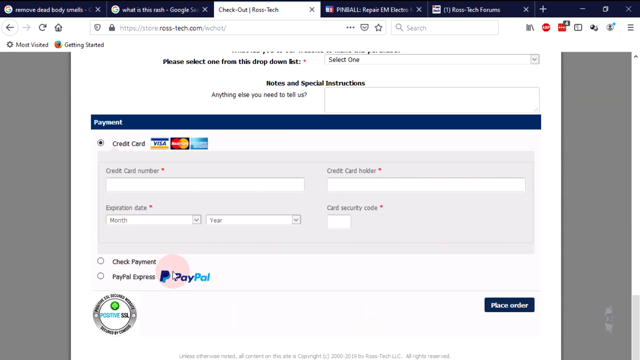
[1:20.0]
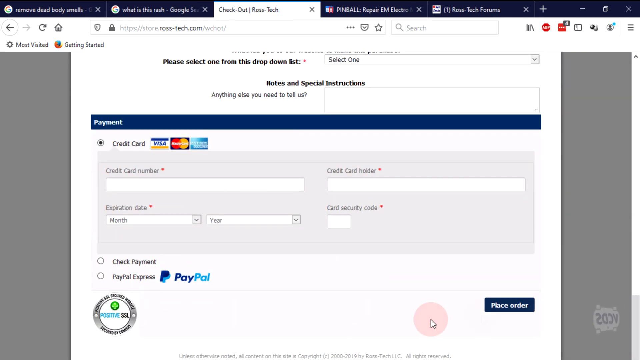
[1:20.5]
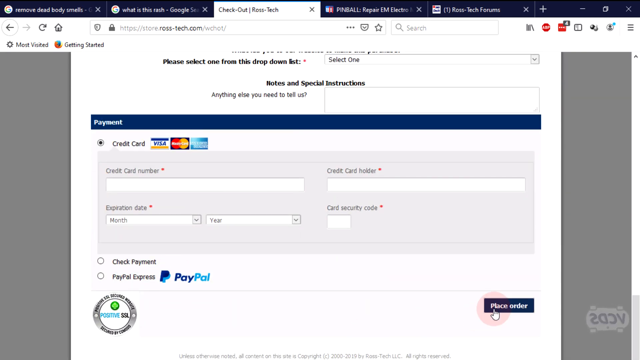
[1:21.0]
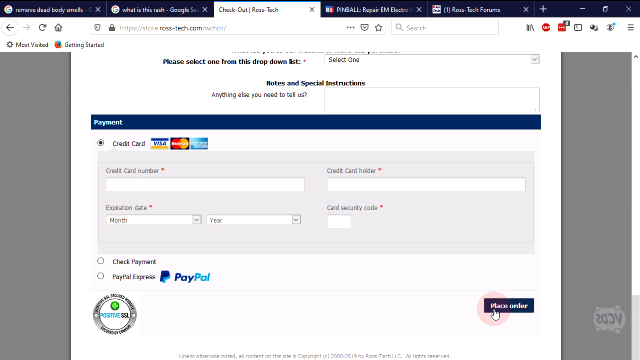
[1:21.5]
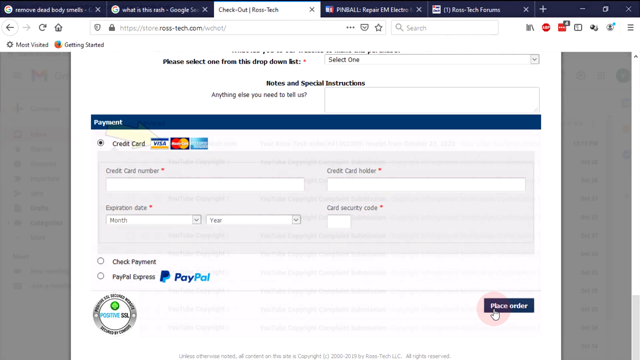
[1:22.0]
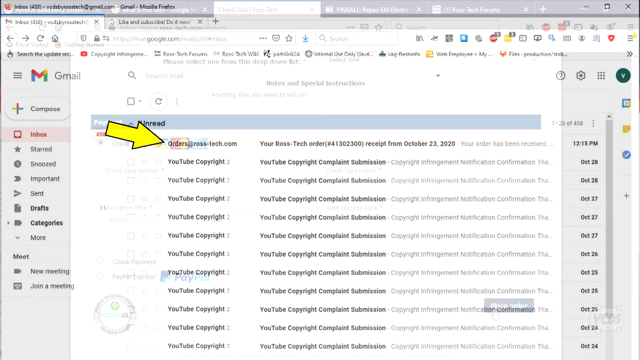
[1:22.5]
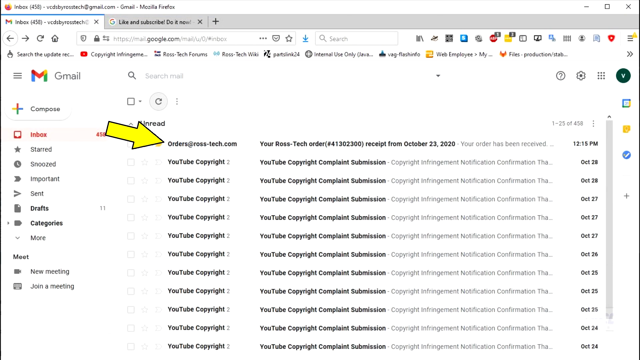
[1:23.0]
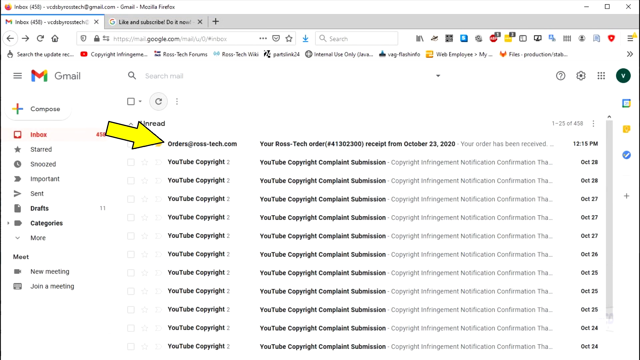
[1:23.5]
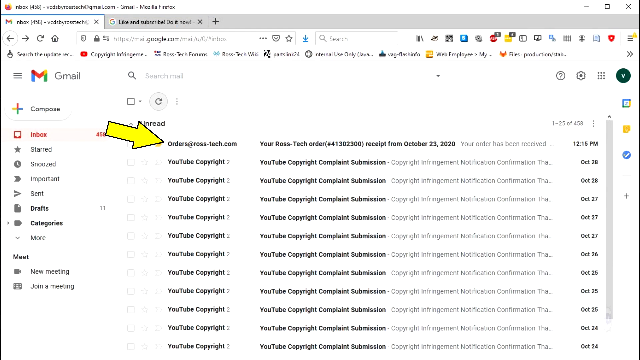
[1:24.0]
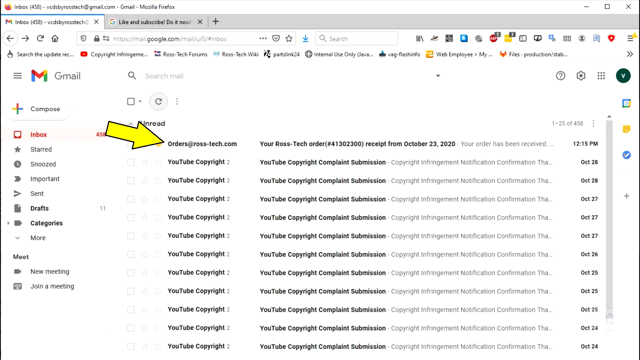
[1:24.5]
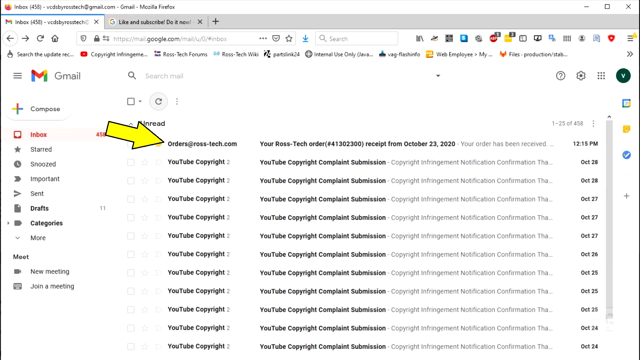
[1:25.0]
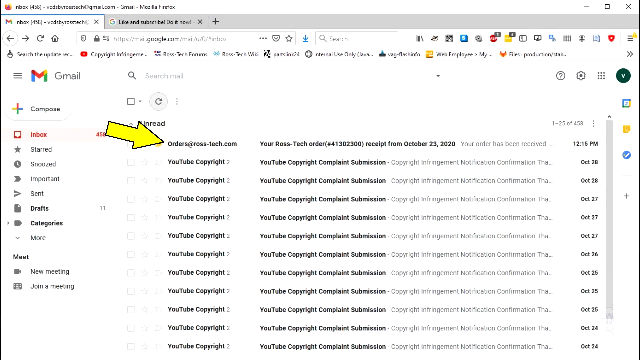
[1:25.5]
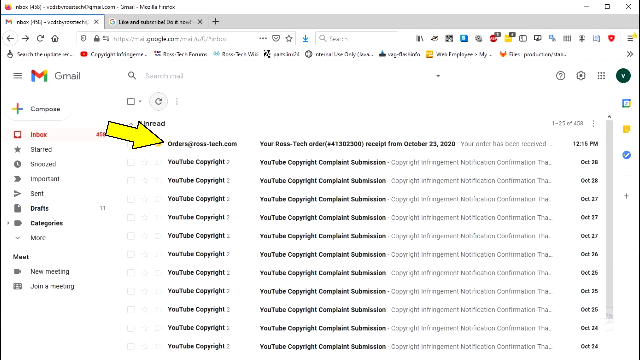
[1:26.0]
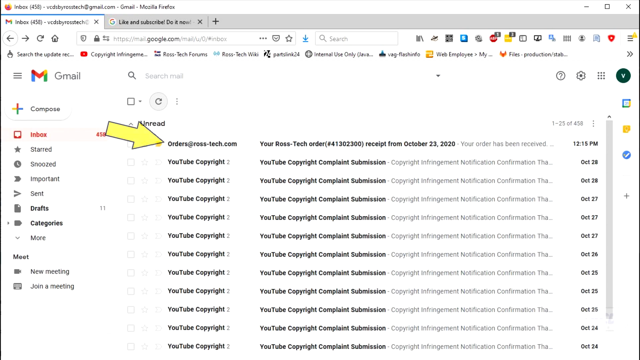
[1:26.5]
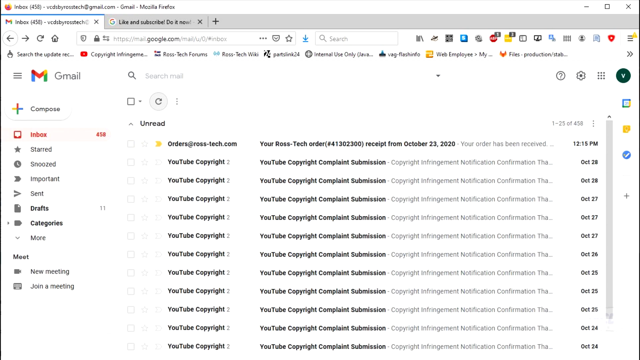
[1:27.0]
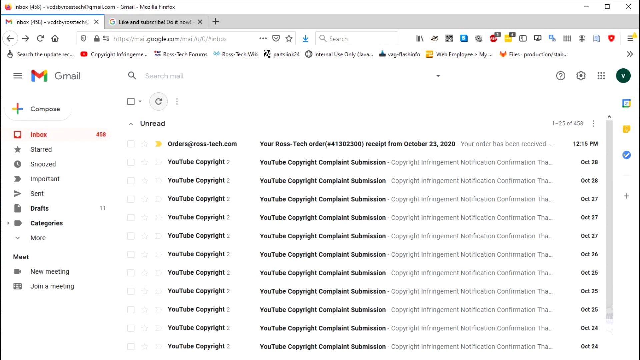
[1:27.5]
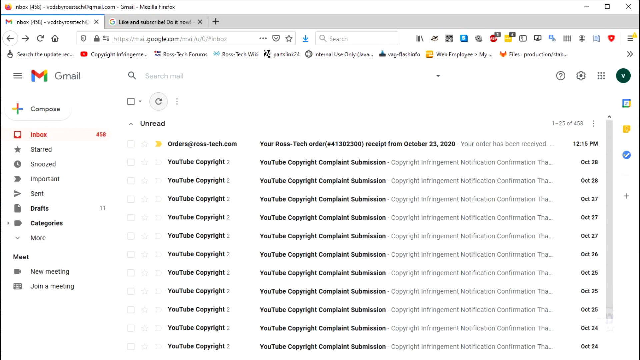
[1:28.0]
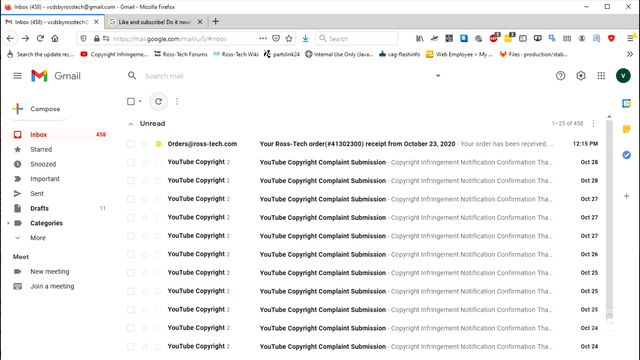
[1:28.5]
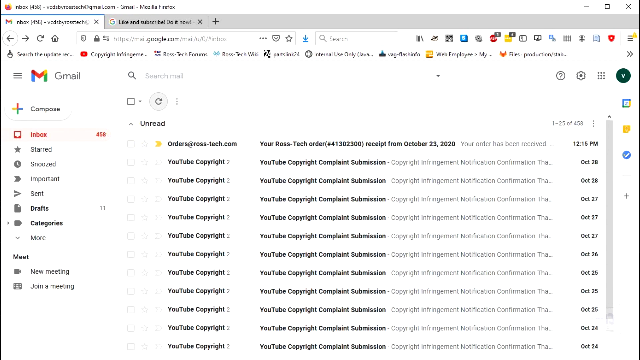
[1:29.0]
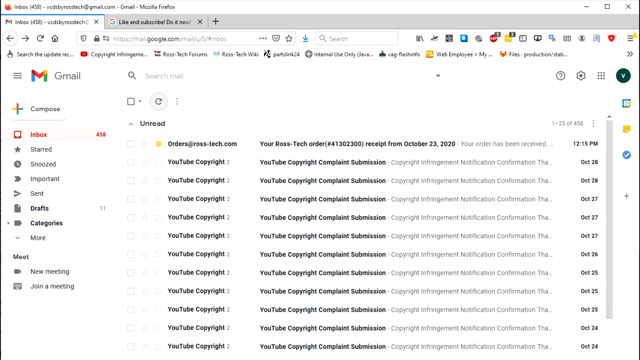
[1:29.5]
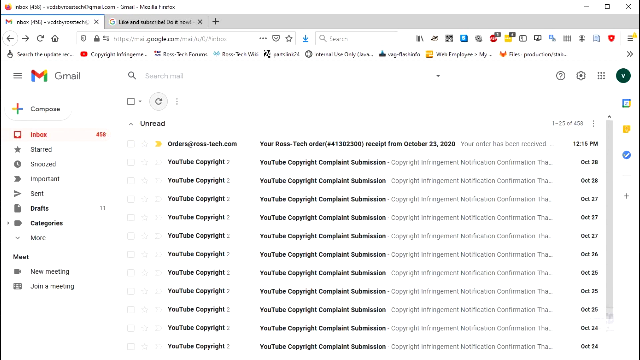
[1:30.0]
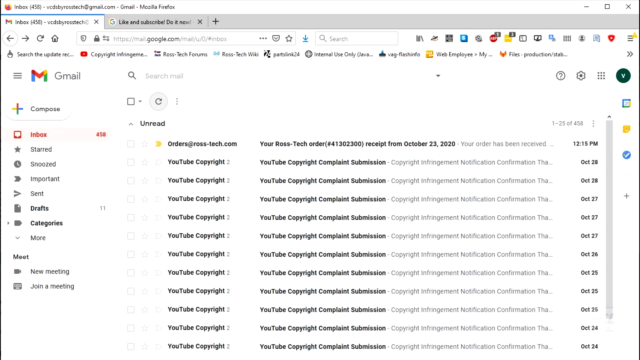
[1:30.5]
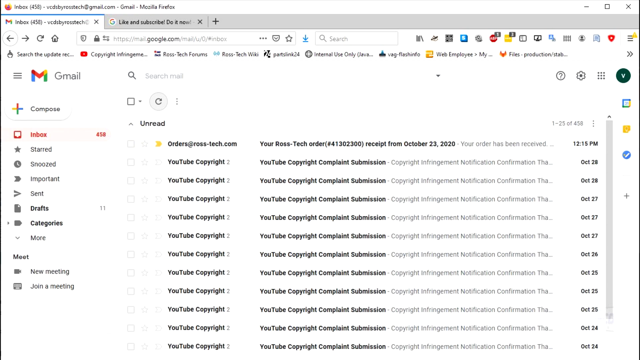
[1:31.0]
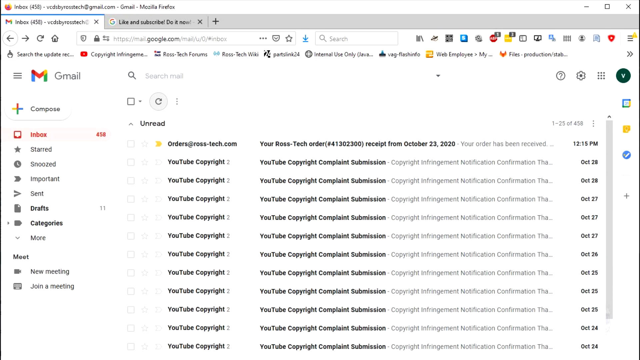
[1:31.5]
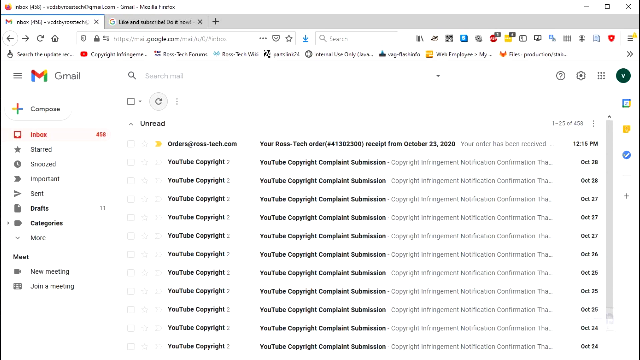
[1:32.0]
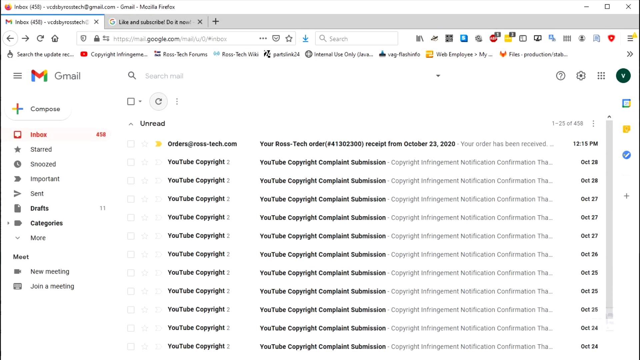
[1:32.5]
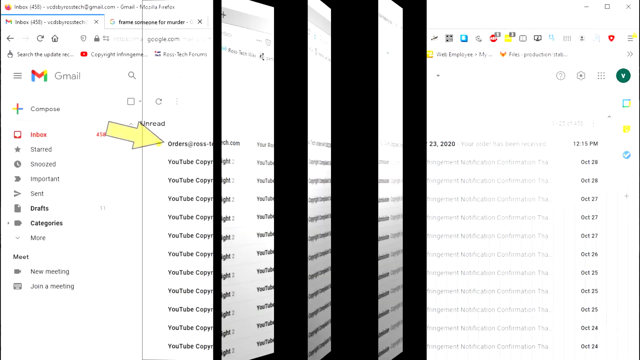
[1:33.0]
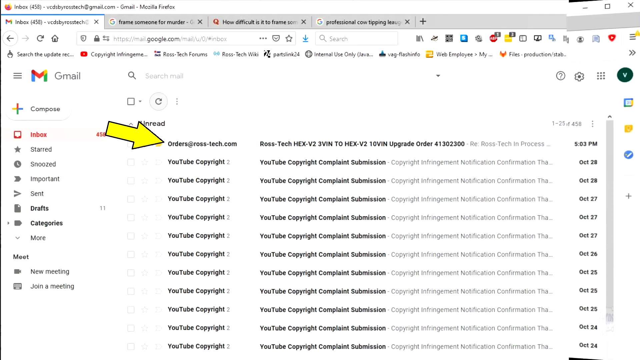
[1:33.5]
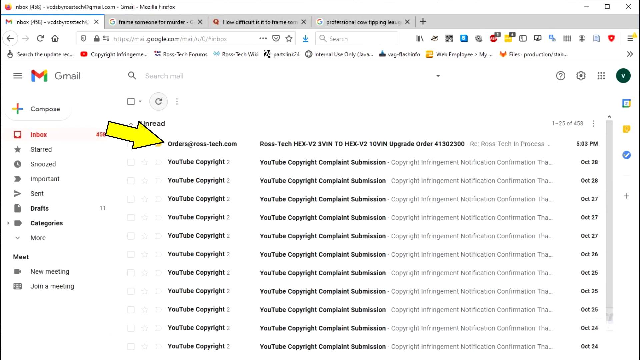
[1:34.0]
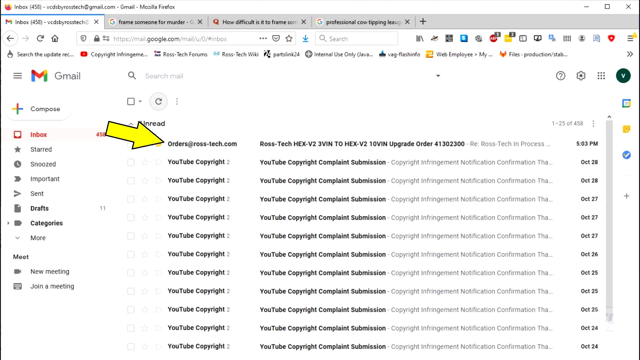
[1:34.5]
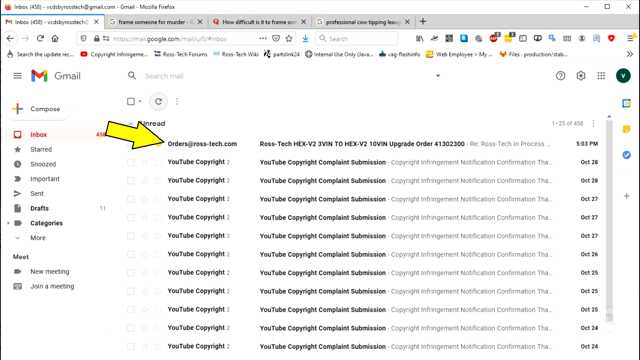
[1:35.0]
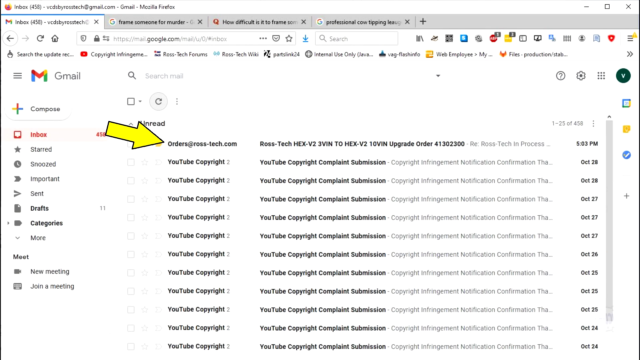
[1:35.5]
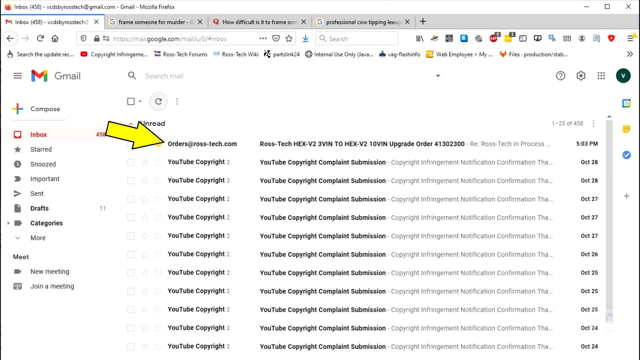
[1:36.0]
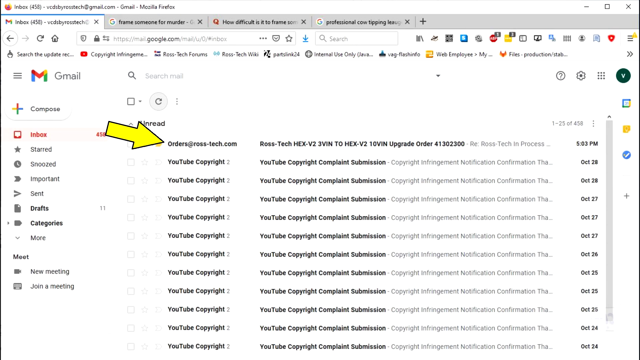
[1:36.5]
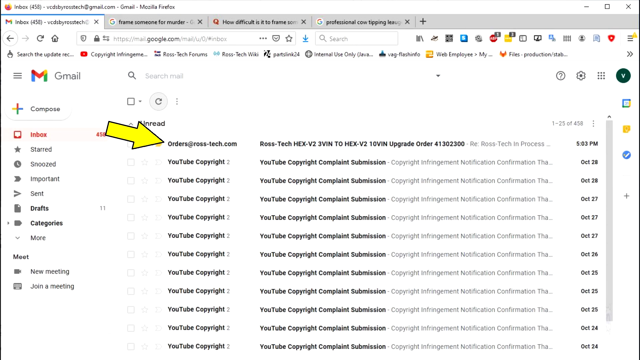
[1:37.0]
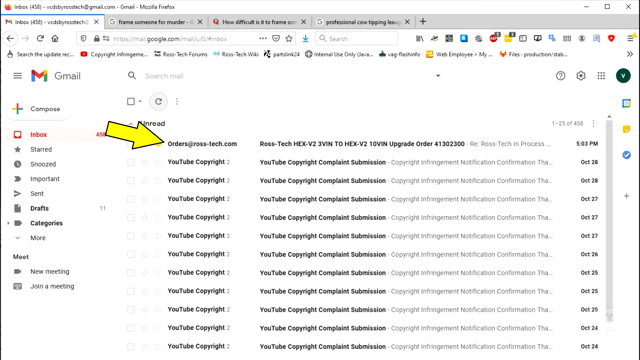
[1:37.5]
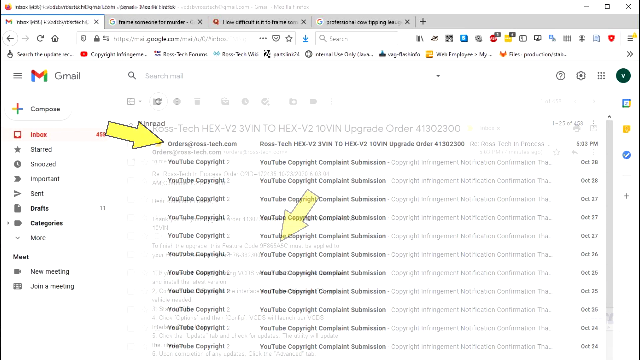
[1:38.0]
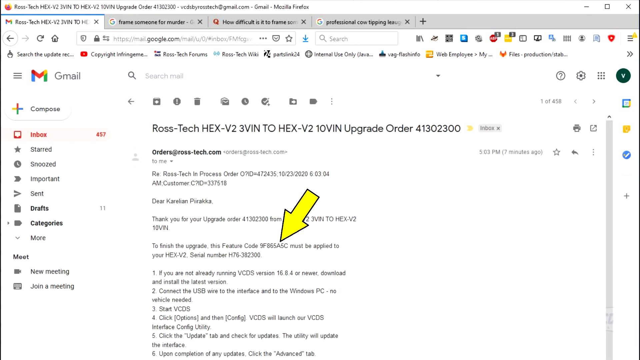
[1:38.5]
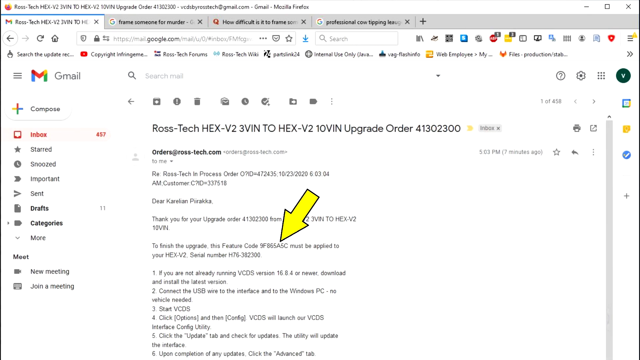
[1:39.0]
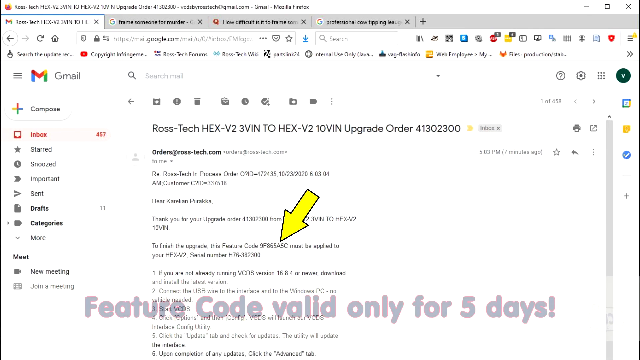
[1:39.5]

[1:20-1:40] A computer monitor shows the current tab, which reads "checkout Ross Tech" in black text on white. An item is being checked out on the Ross Tech website. At the top is a notes and special instructions option with a box. Below that, the payment option is checked for credit card, with a form containing fields for the credit card number, the holder name, the expiration date and the card security code. Under that are small circle buttons for check payment or PayPal Express, and a PayPal icon is visible. The mouse clicks on place order. A new page then opens with a yellow arrow pointing to the orders at rosstech.com address. Small bold black text reads "your Ross Tech order" with the order number, received October 23rd, 2020, at 12:15 pm. This is the Gmail account of the person who just placed the order, showing the order copy sent to it.